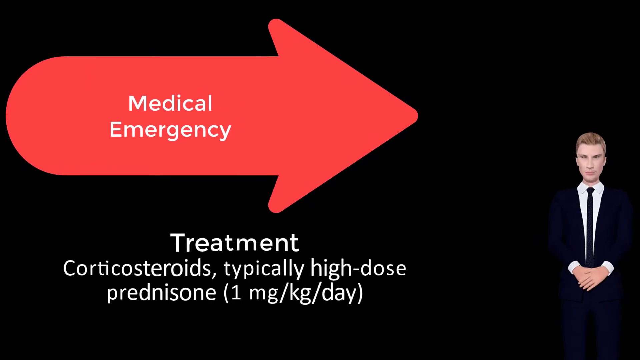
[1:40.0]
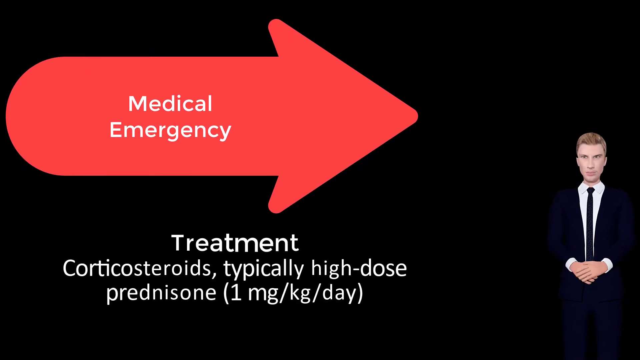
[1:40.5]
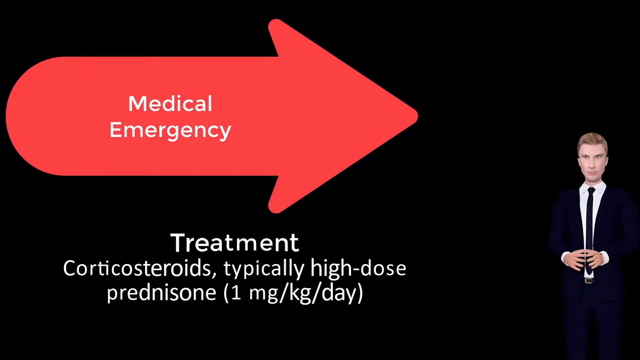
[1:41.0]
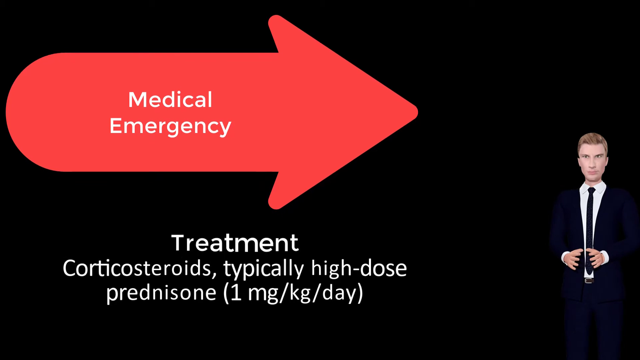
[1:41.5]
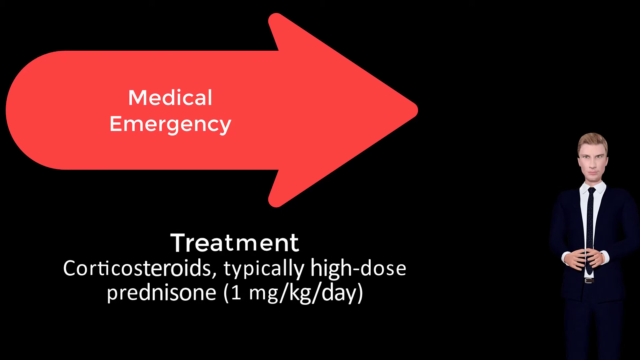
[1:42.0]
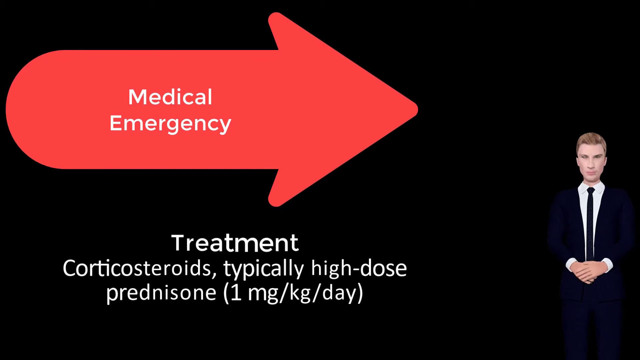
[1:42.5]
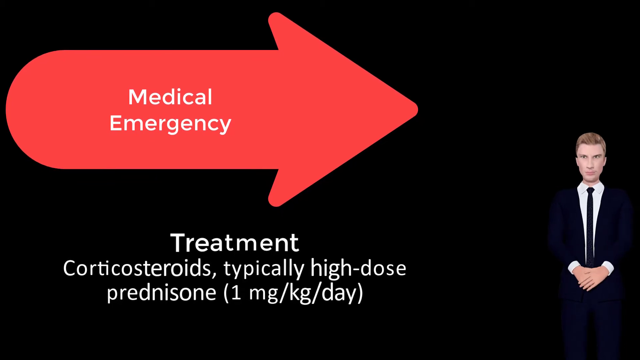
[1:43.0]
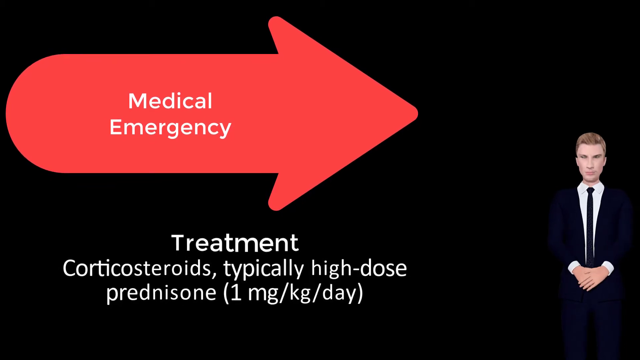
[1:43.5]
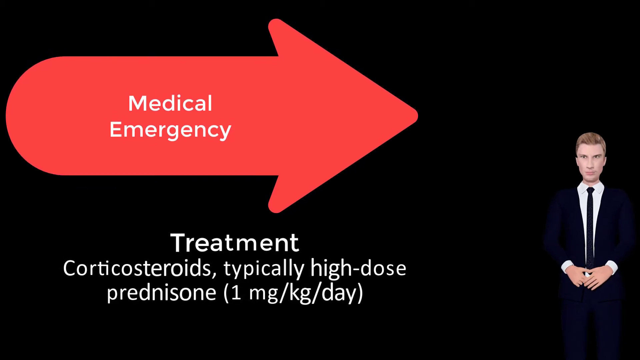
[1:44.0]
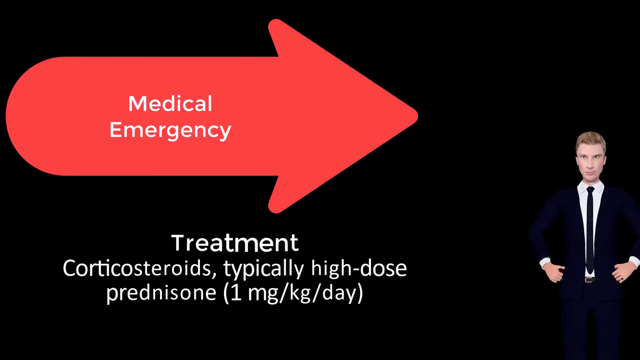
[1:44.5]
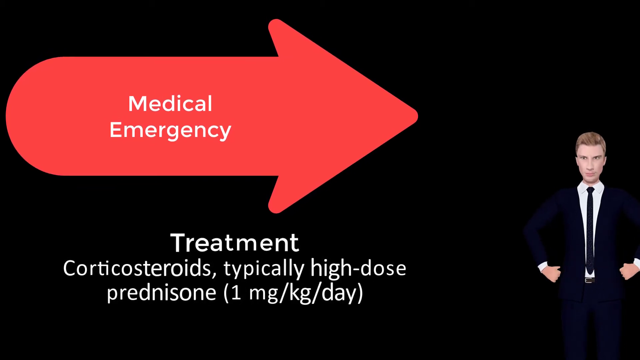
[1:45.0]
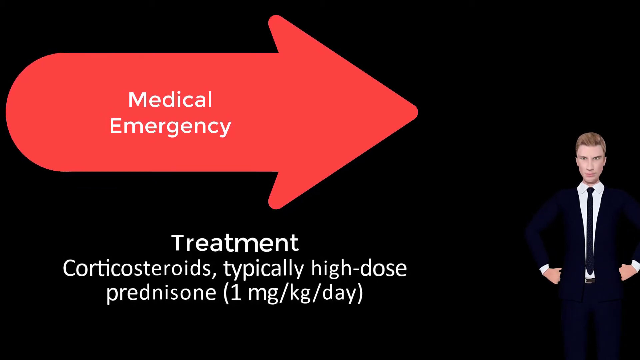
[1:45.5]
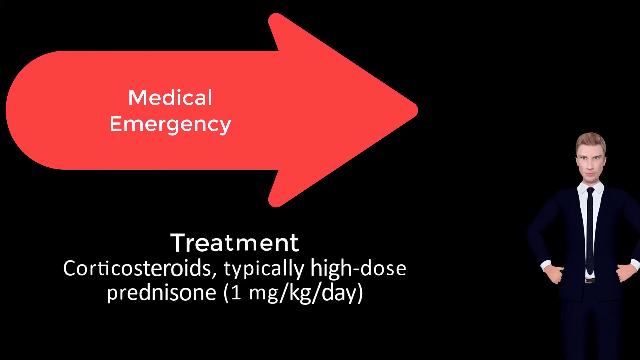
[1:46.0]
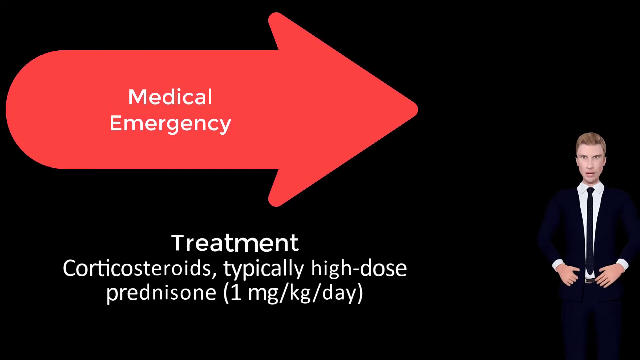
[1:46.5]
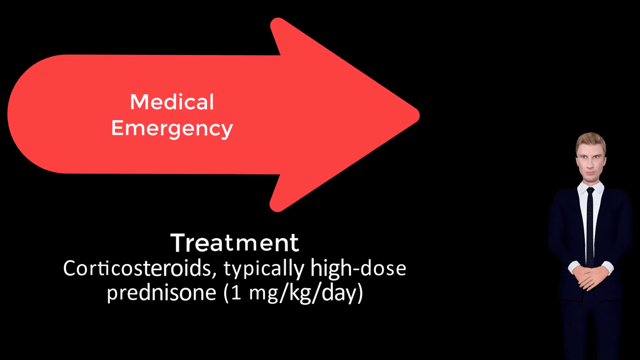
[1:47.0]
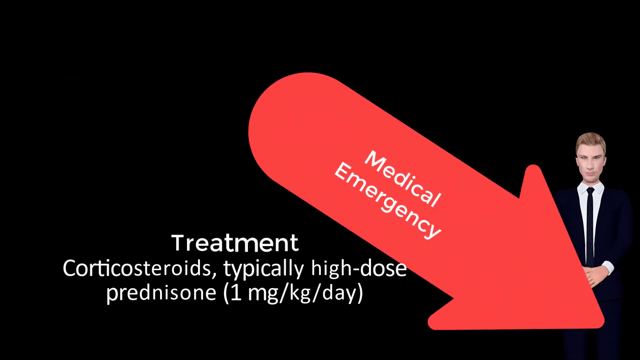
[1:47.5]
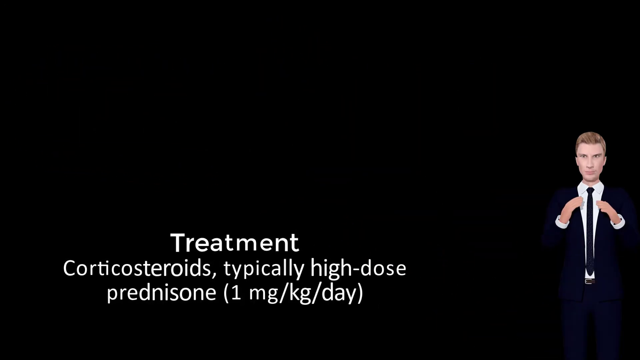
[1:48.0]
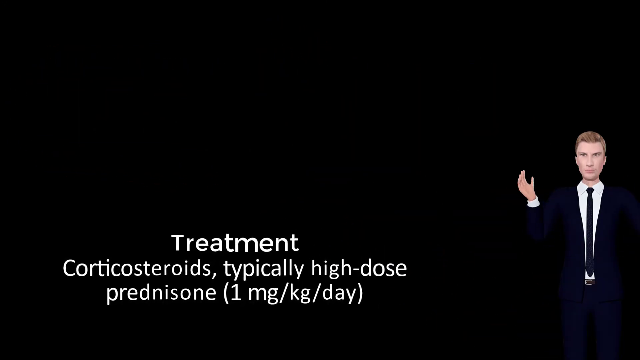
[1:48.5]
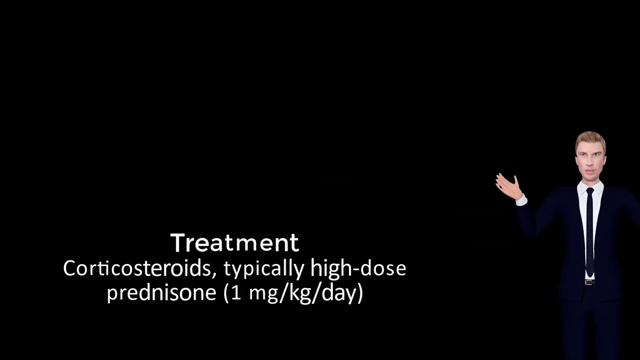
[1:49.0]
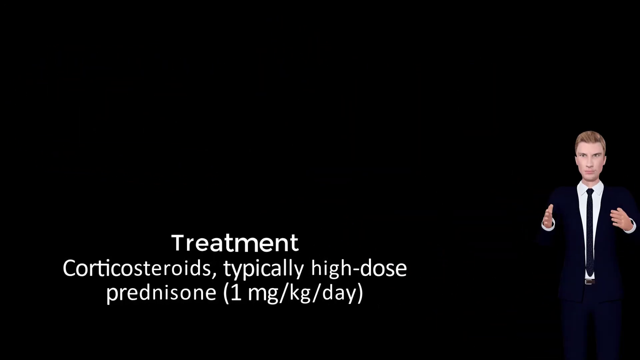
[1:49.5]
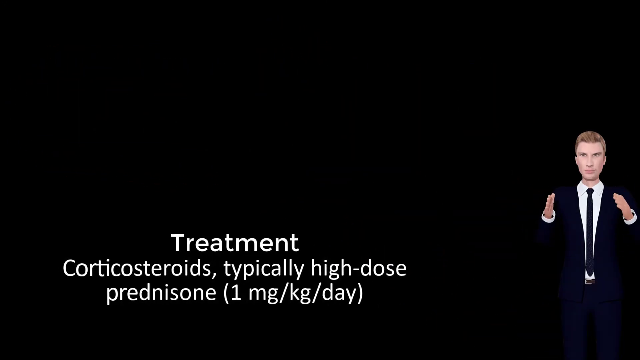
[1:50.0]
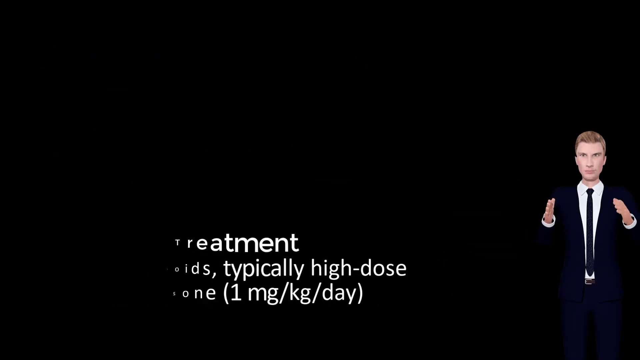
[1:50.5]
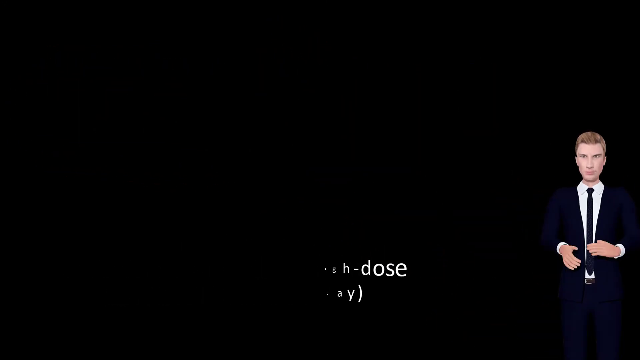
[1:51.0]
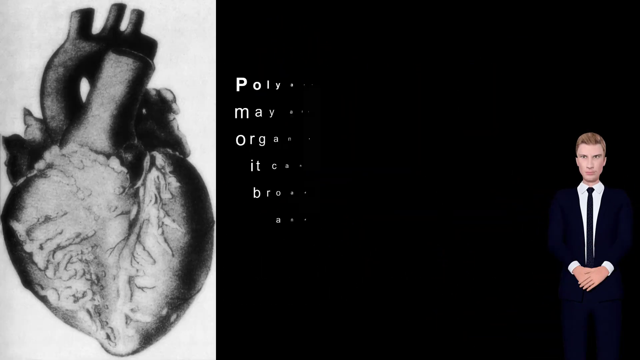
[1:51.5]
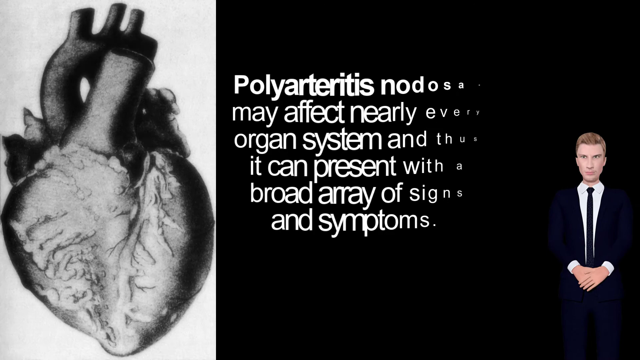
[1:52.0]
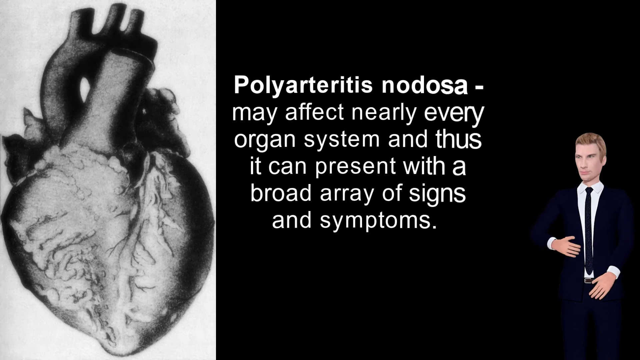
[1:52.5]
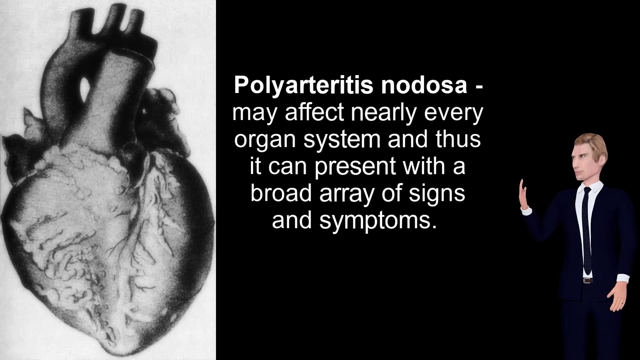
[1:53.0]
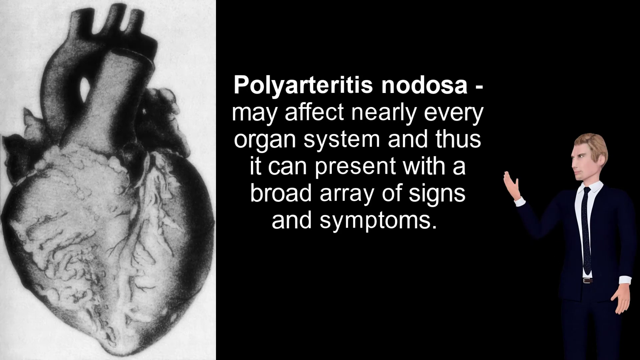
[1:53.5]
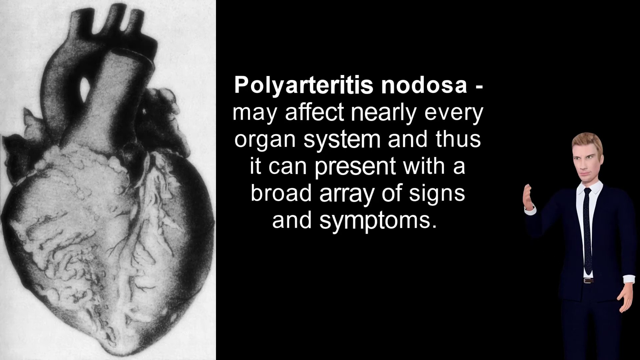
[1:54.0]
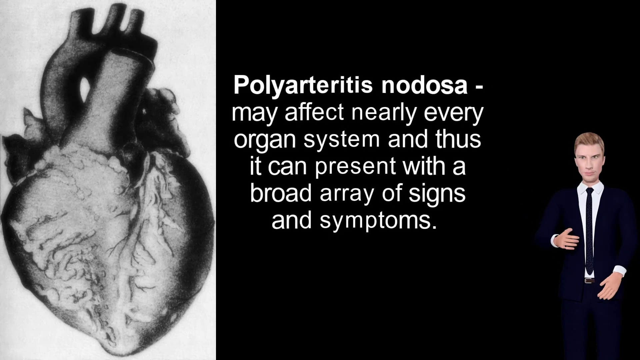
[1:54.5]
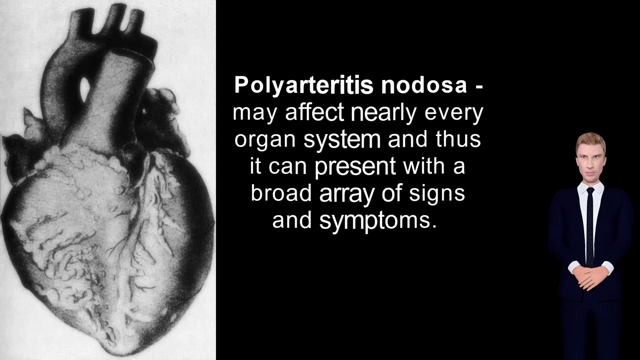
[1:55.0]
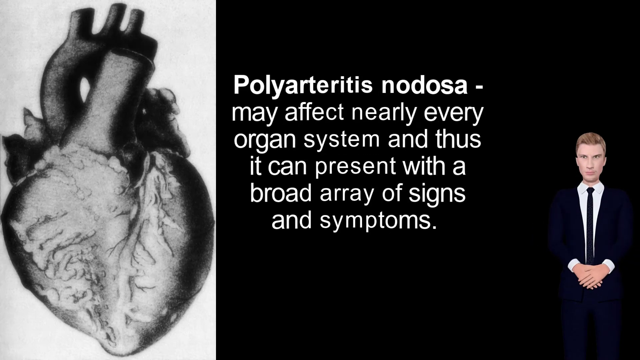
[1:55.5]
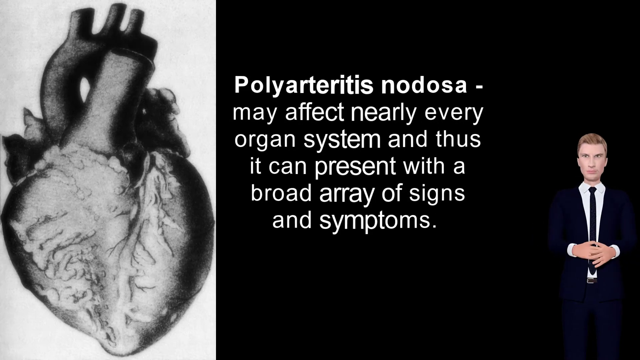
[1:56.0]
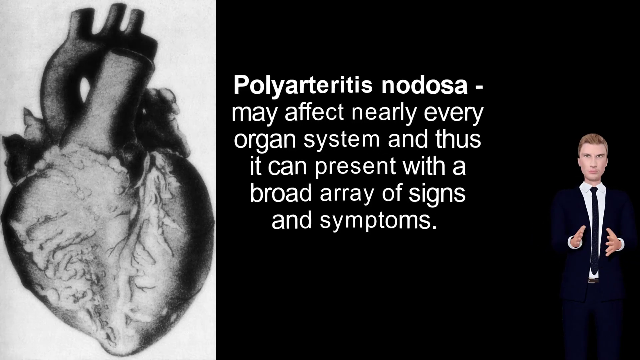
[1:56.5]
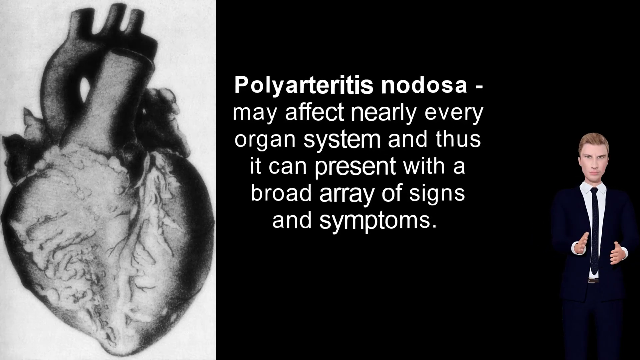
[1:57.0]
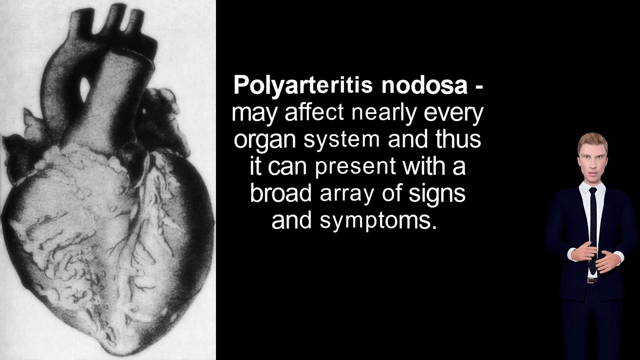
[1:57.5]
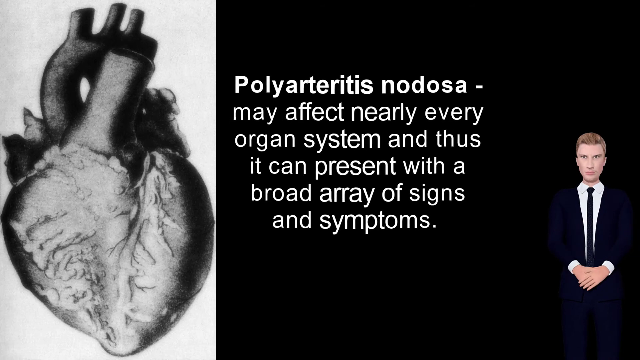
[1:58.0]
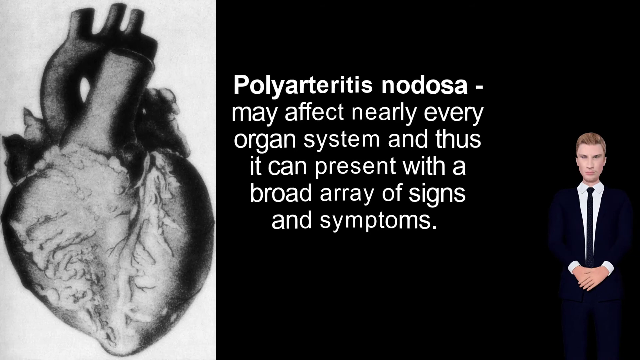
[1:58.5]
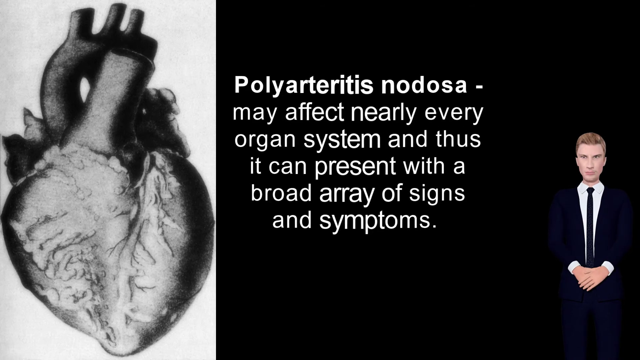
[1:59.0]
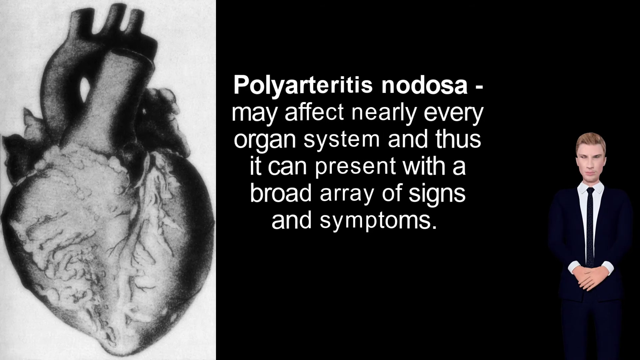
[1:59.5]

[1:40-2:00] Text refers to the medical urgency of treatment with corticosteroids and prednisone. A 3D animated person wearing a tie is in the bottom right section of the screen. The word "polyarteritis" appears with text stating that "it may affect nearly every organ system and thus it can present with a broad array of signs and symptoms", and distributions are shown on a heart.